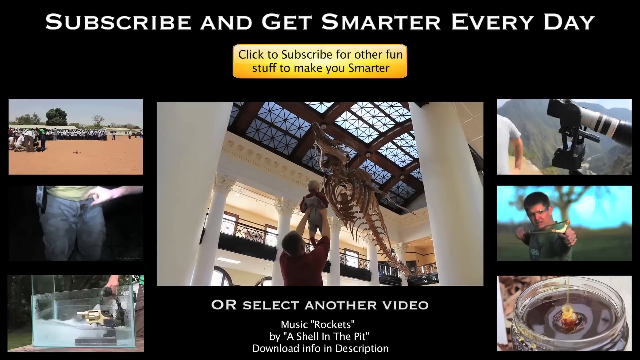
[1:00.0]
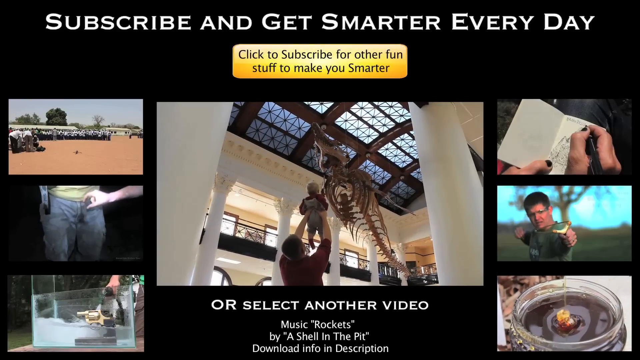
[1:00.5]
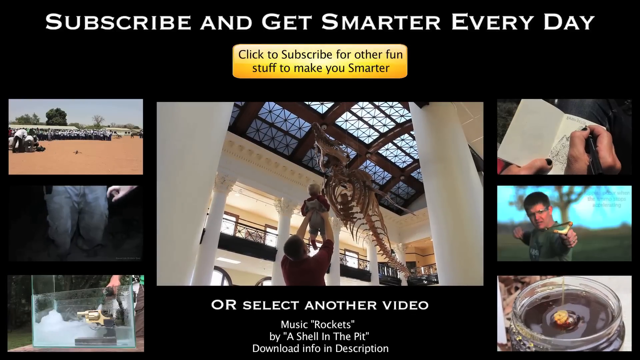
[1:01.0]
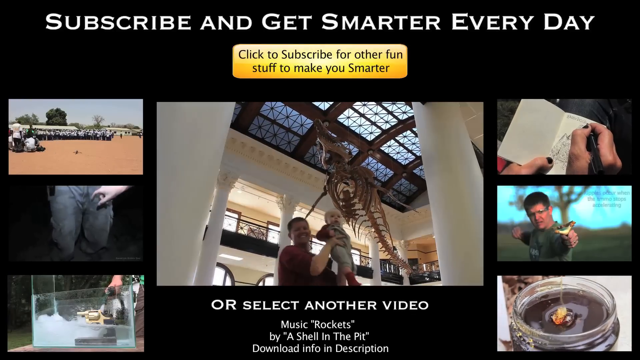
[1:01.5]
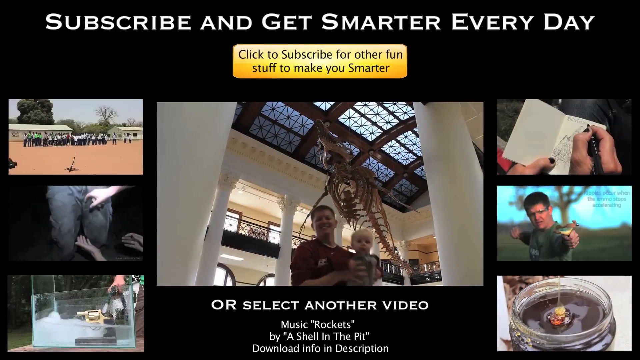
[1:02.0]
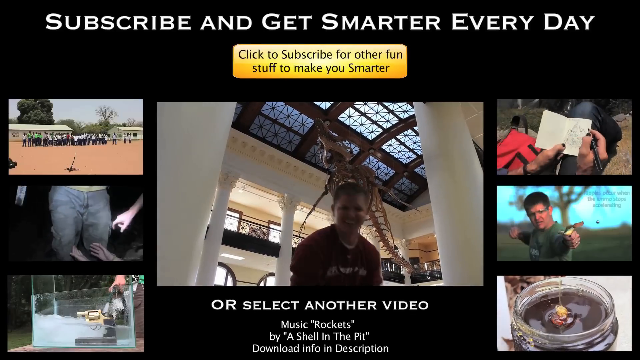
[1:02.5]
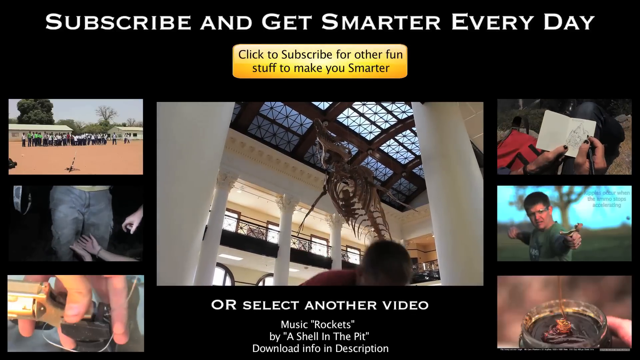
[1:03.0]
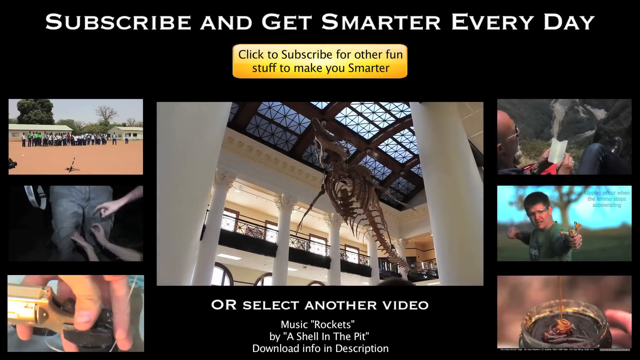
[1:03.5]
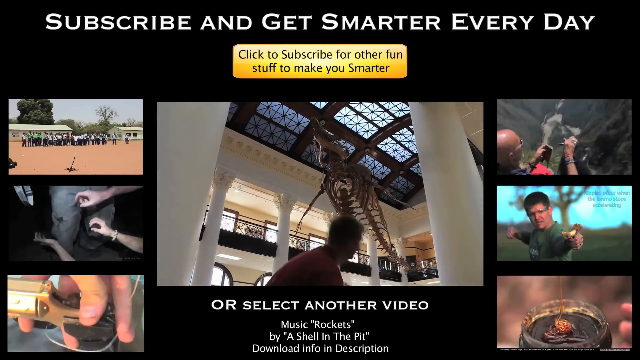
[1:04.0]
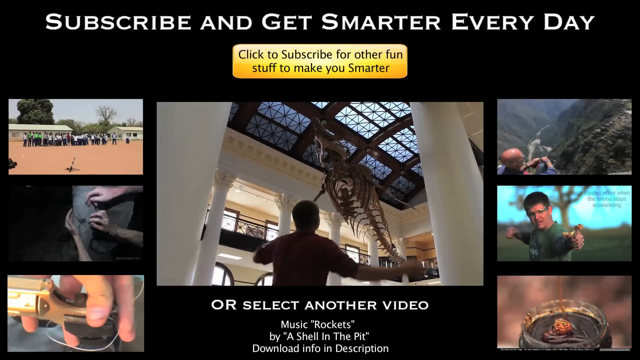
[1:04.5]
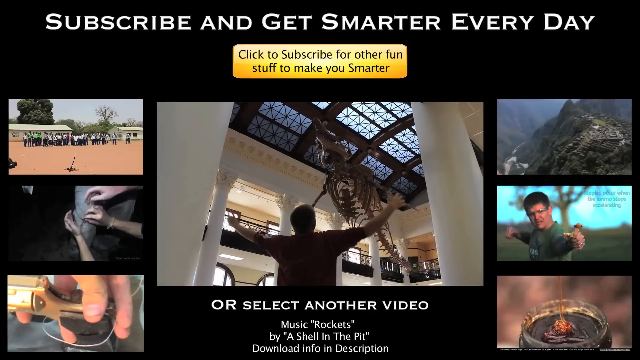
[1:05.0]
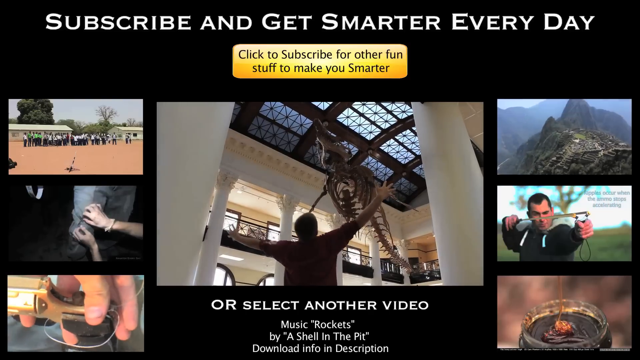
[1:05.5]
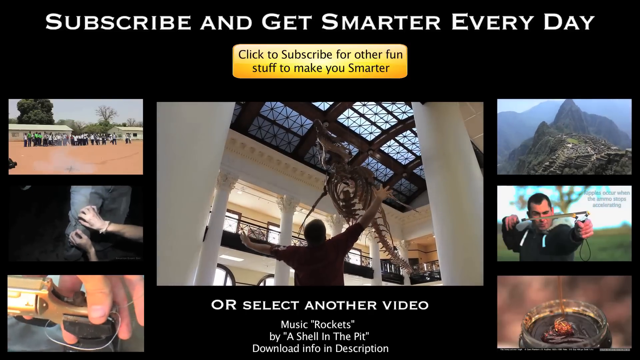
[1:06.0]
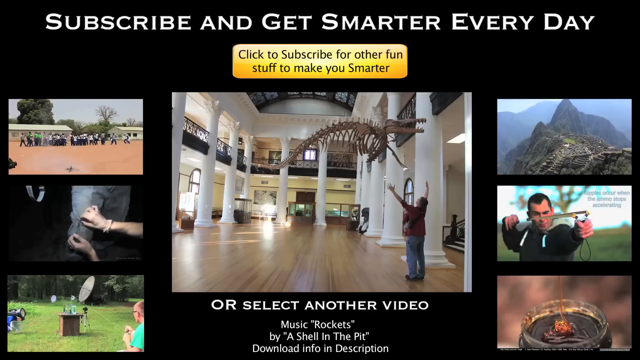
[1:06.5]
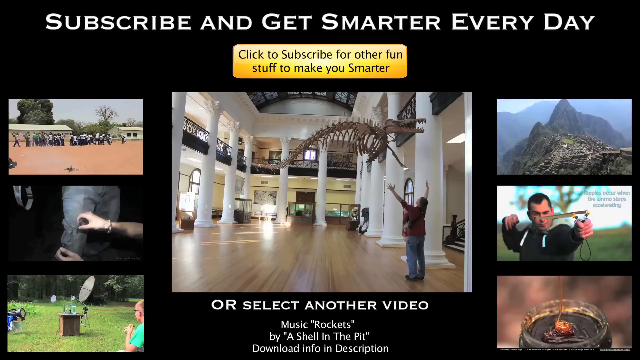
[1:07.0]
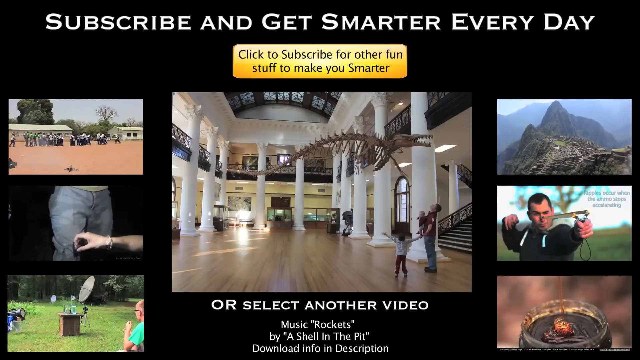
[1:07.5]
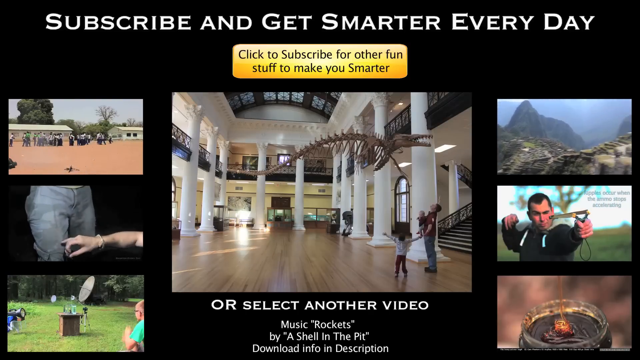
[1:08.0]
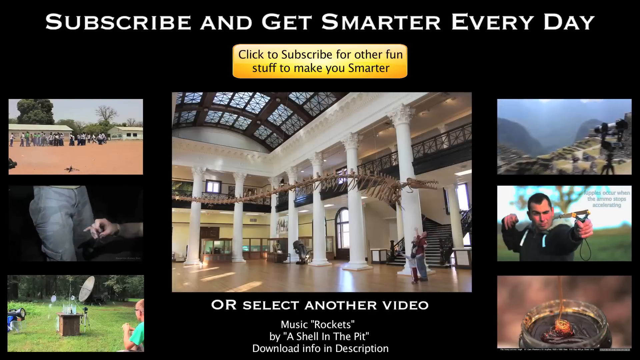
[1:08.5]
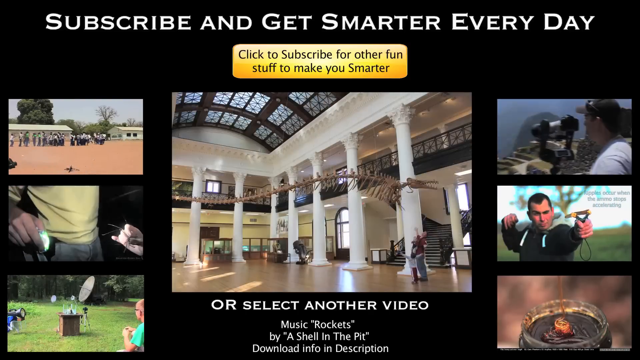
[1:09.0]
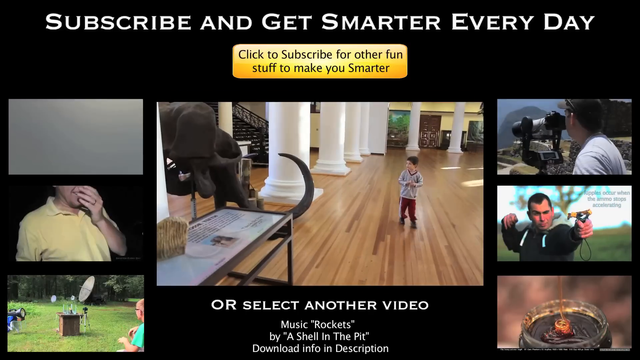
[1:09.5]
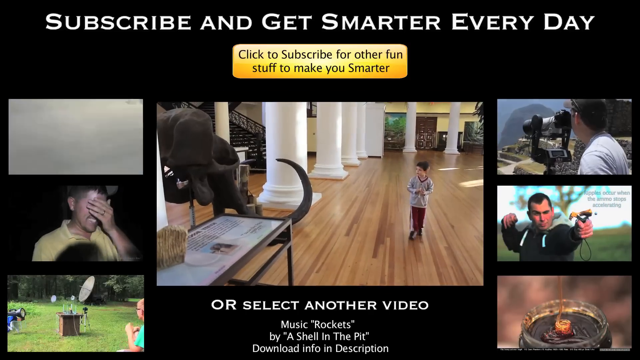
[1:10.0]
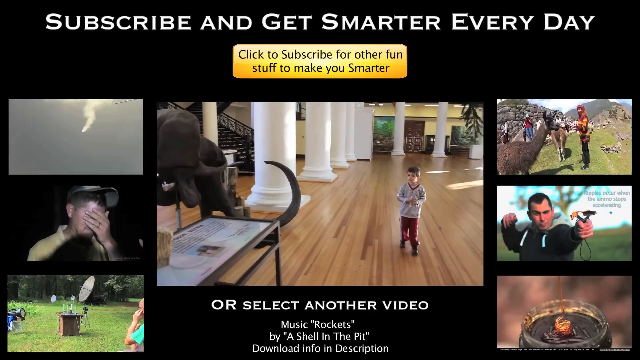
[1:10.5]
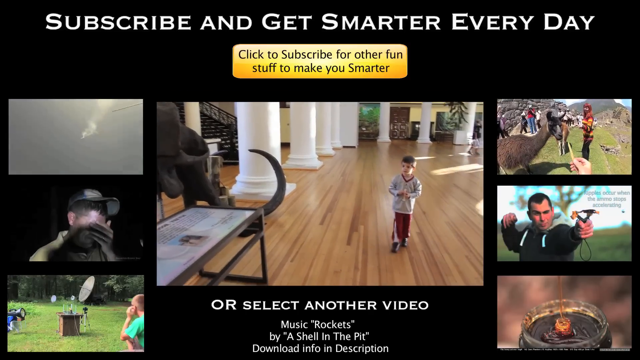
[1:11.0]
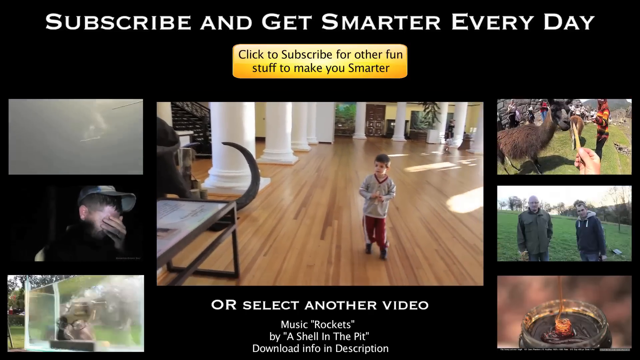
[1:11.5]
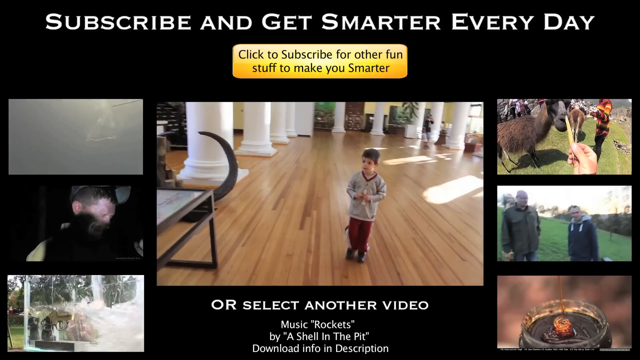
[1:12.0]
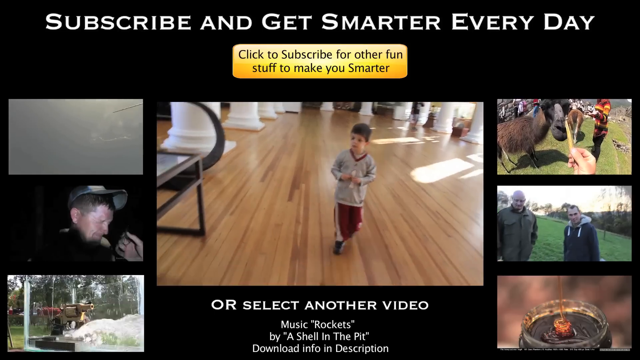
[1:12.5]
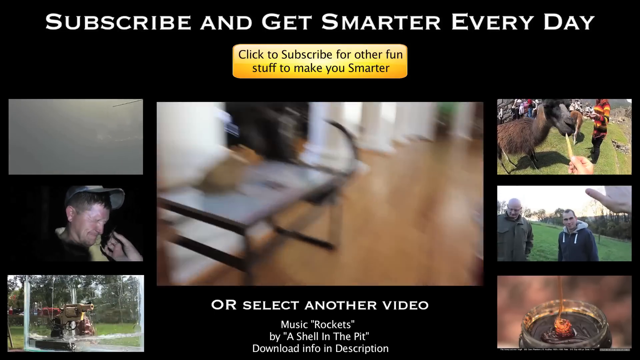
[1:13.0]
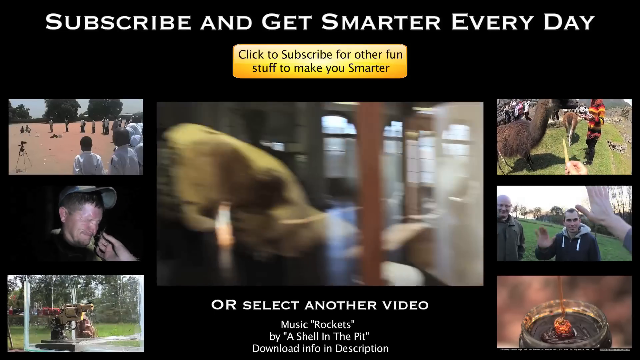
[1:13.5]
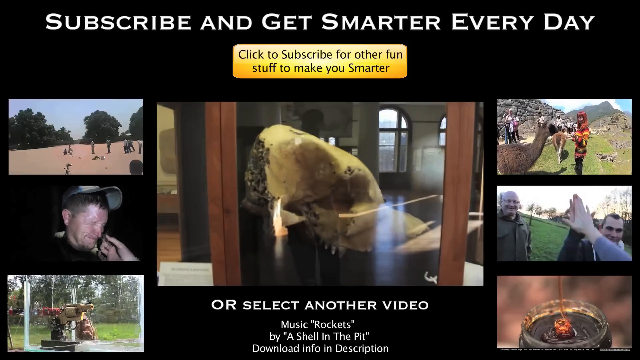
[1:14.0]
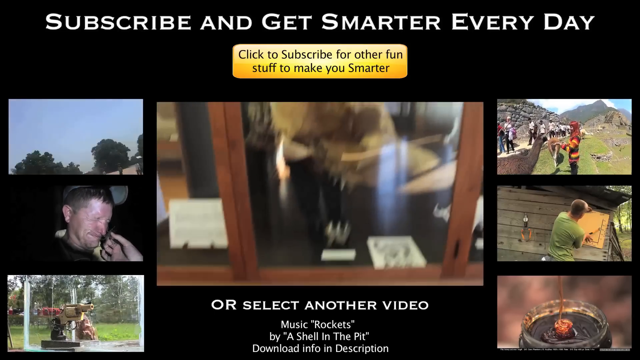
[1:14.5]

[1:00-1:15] Something in the sky appears for a second, then the screen with the man holding up the baby toward the bones of a dinosaur, with smaller pictures on each side. One shows a bus, one shows some people in the dark, and another shows people with animals around them; these various side pictures kind of keep popping up one after another. In the center, a little boy walks down the aisleway looking at the displays. The man holding the baby up to the dinosaur bones appears again, and he kind of puts his arms up at the dinosaur bones. As the boy walks down the hallway, something like a horn kind of sticks out the side, and there appears to be something else attached to it that cannot quite be made out. There is also a glass display with something in it.